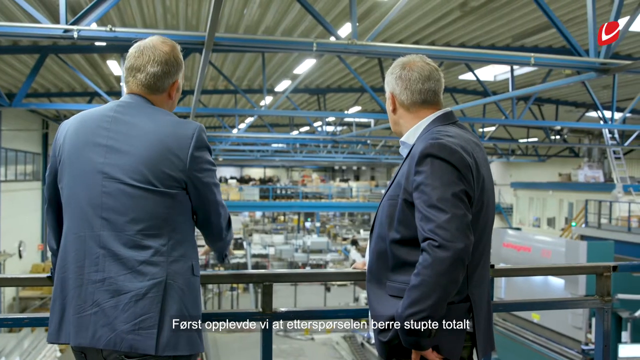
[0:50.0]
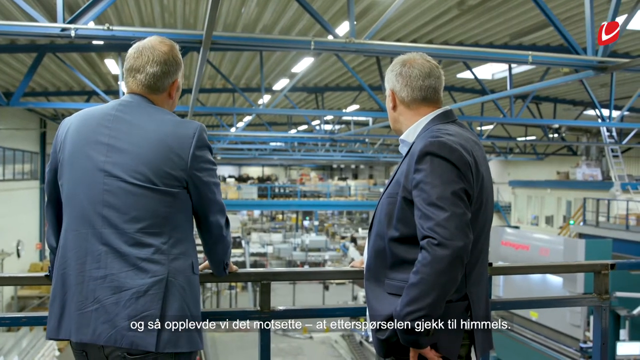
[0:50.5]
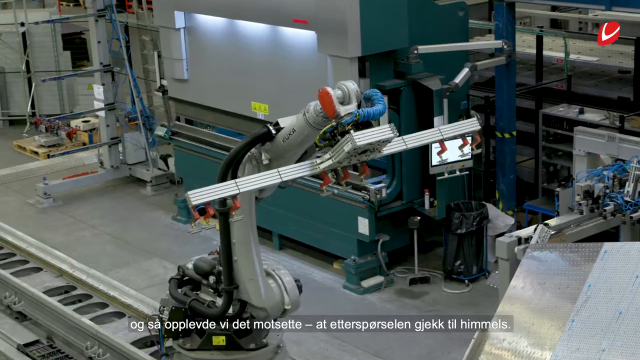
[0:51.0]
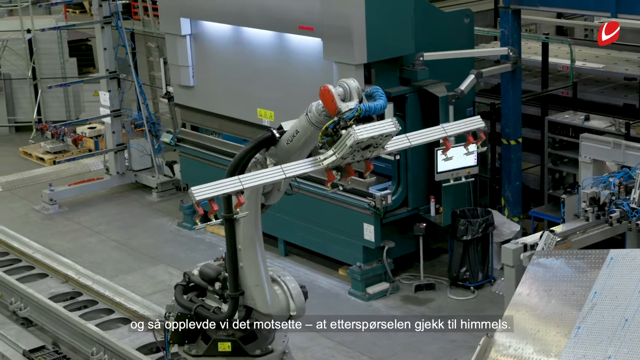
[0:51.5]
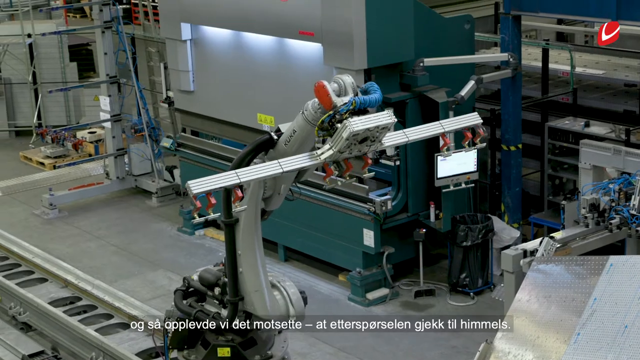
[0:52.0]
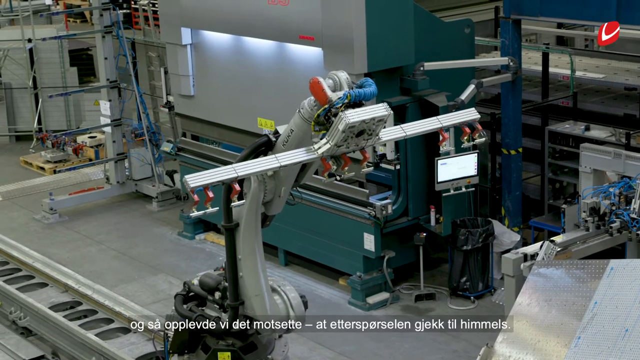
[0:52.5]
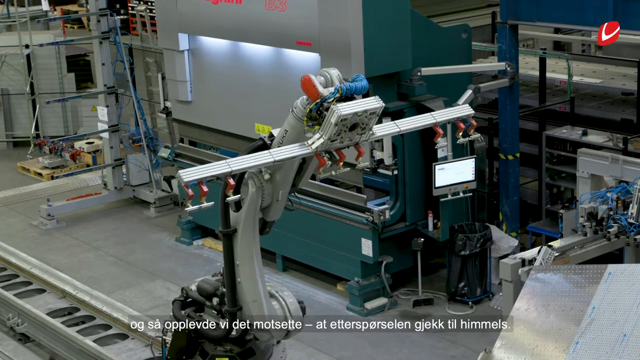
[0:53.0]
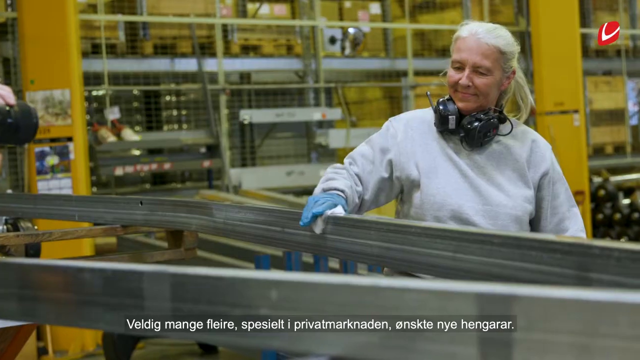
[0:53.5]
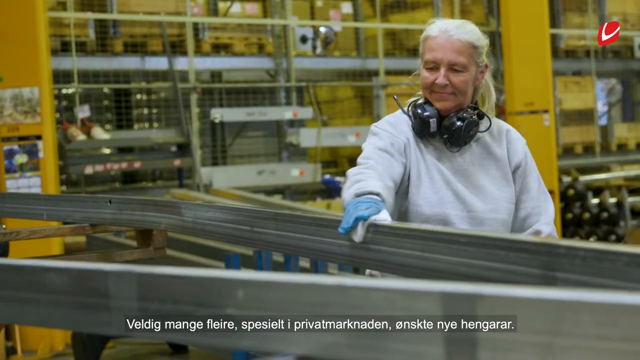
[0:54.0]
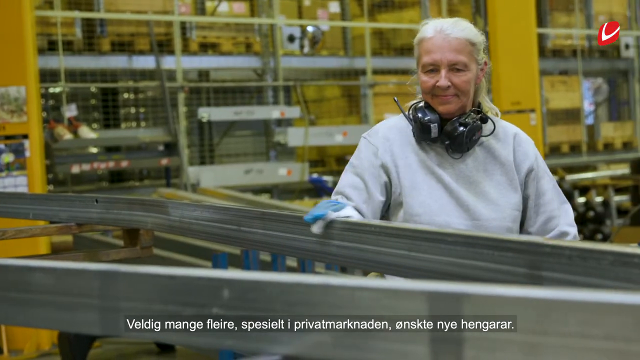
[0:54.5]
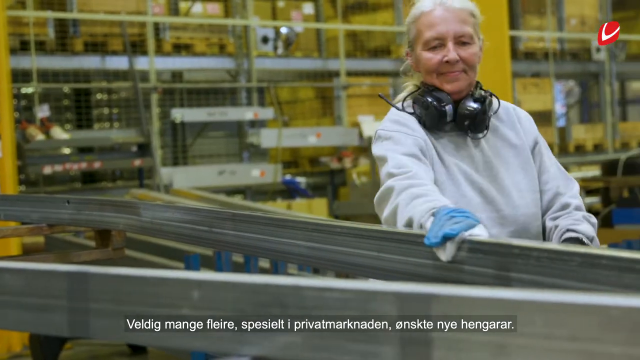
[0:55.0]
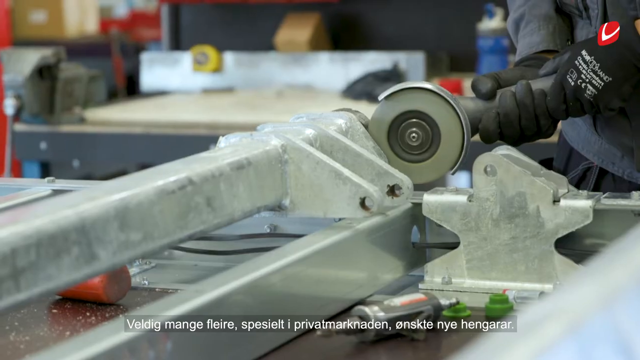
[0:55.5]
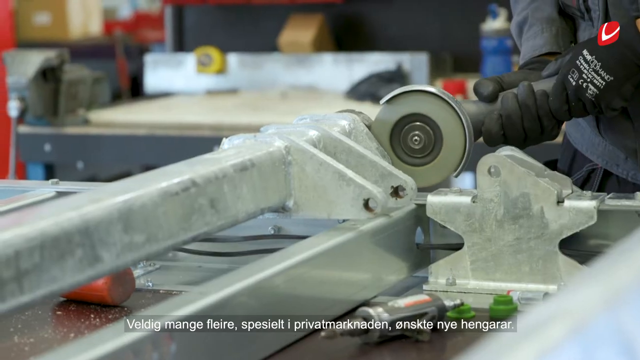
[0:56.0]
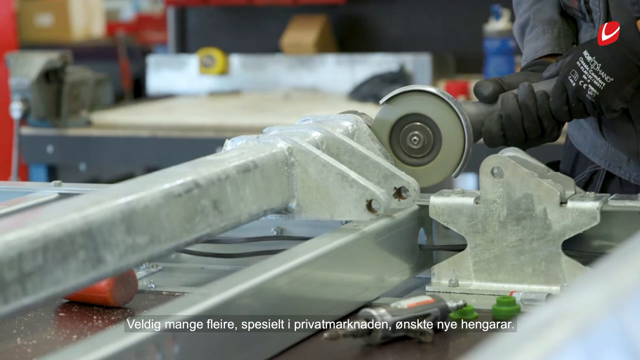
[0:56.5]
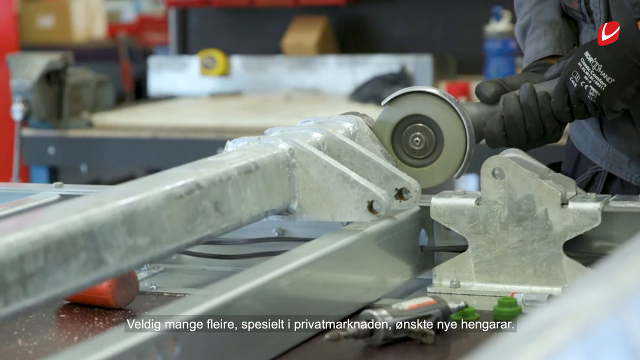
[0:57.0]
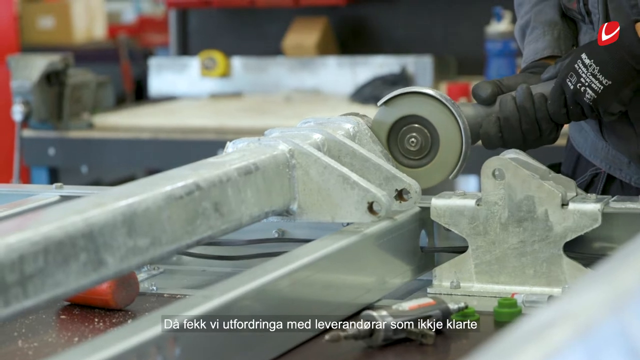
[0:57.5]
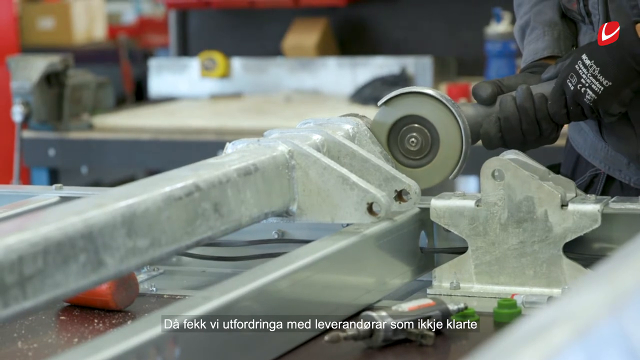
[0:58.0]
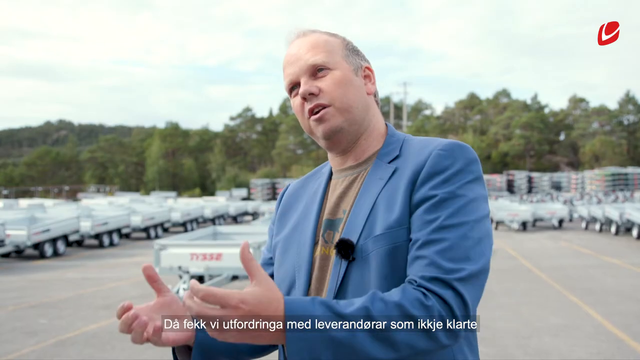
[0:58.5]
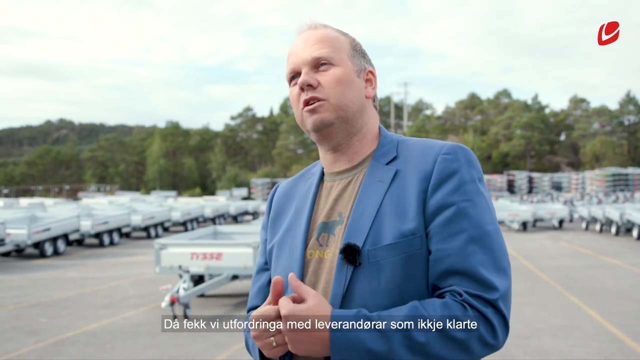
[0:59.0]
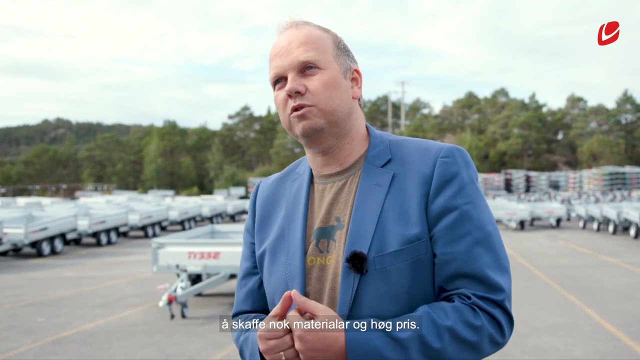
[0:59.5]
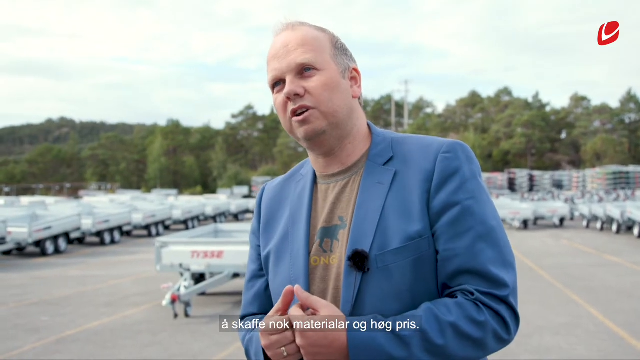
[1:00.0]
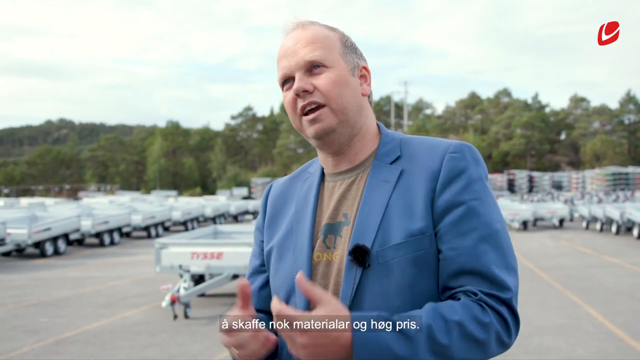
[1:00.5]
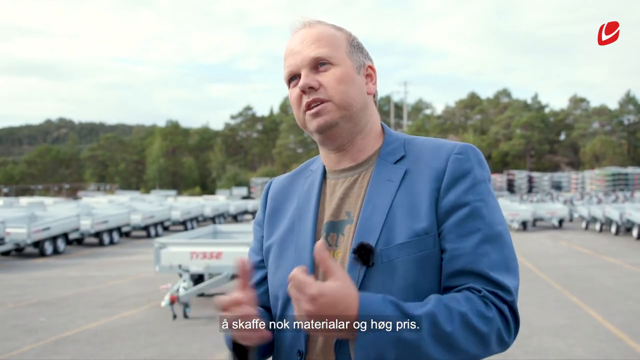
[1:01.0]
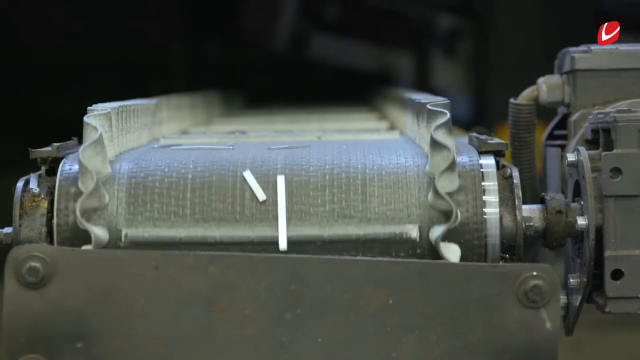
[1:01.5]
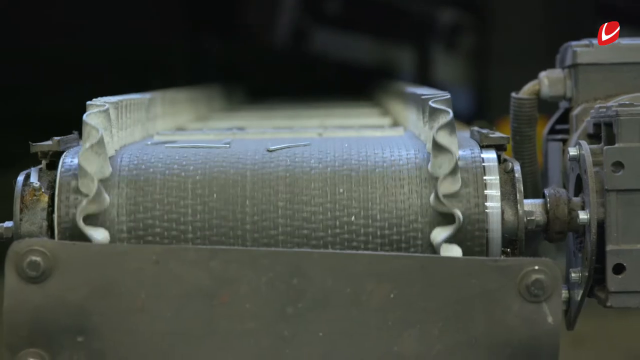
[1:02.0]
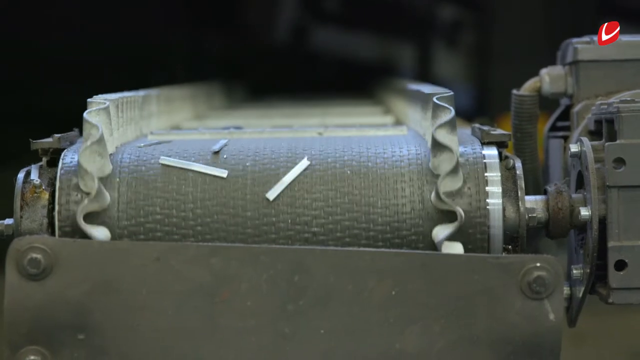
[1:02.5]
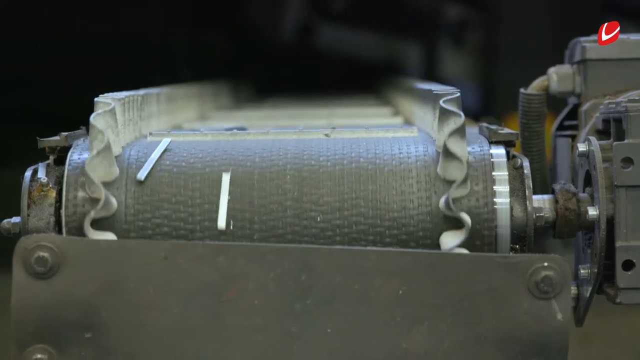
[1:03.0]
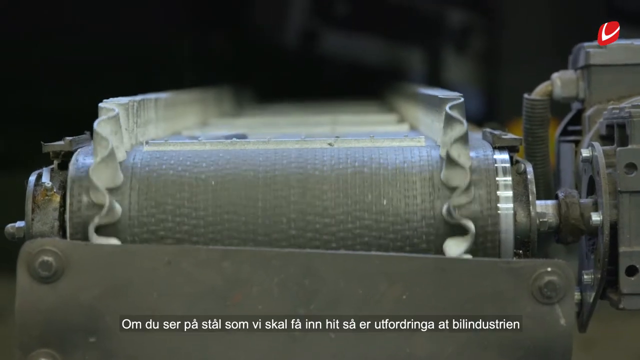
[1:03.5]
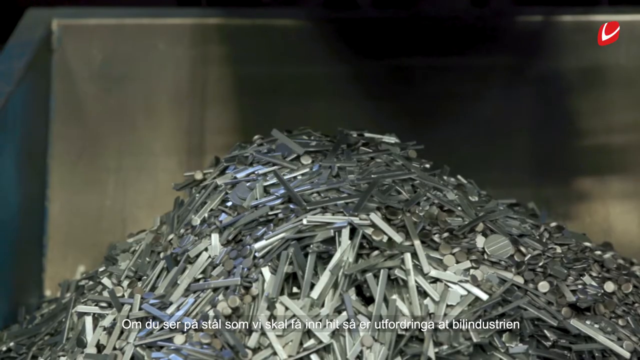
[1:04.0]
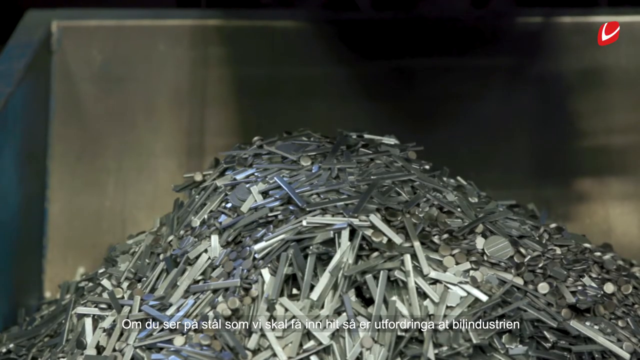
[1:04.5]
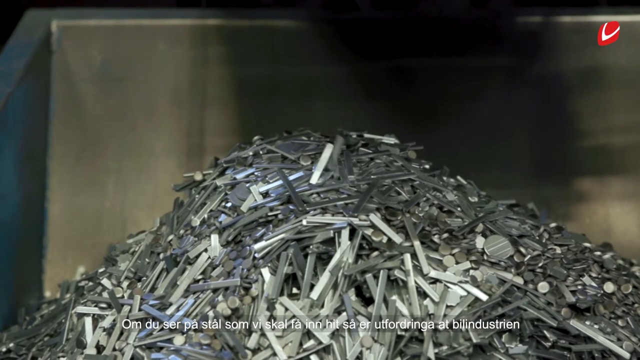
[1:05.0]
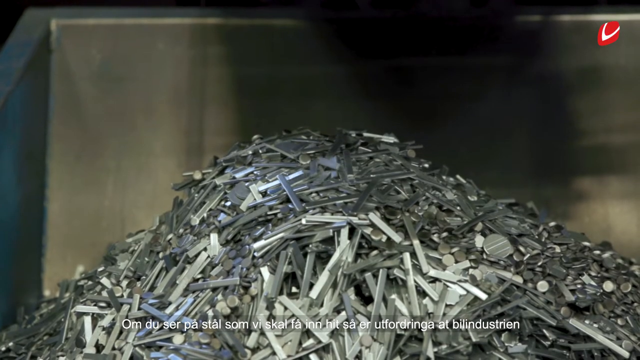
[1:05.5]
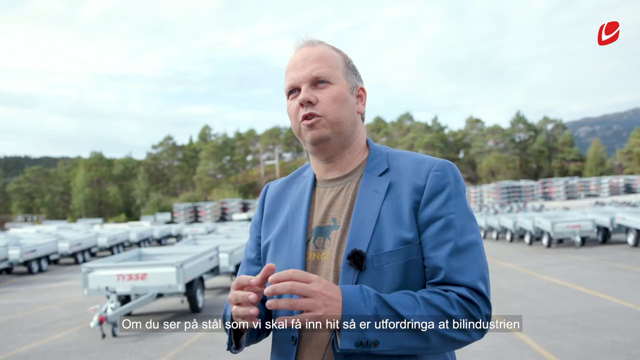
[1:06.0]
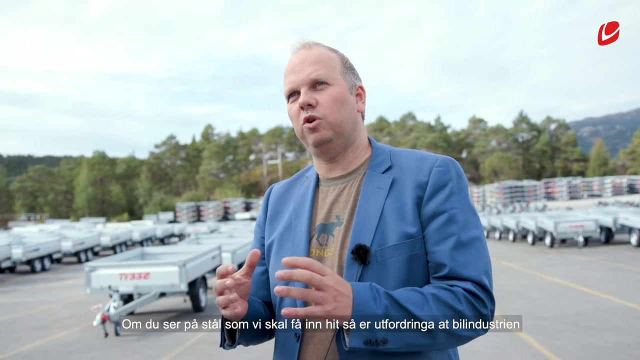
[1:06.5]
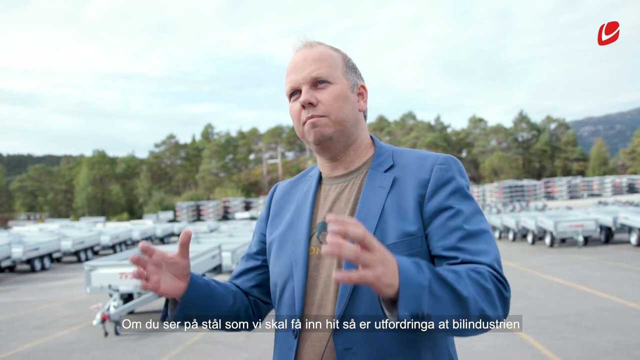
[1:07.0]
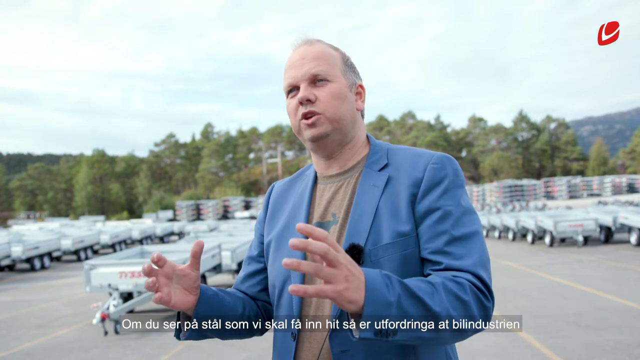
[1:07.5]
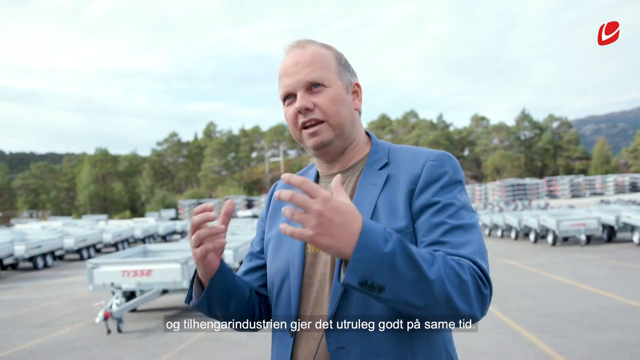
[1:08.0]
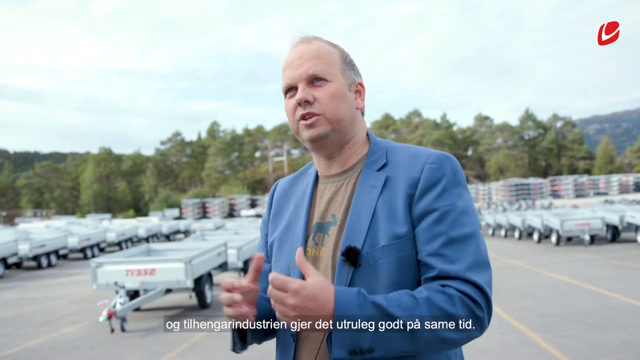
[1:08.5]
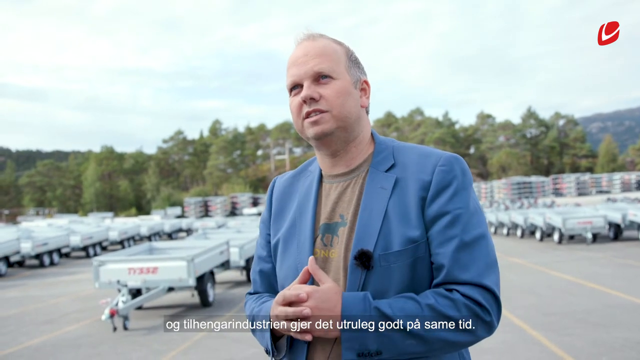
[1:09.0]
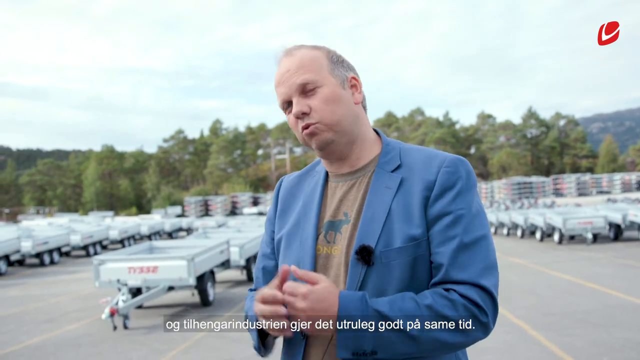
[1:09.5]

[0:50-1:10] The two men who were previously shown talking individually to the camera are now both inside the warehouse, on a higher level from which they could look down on the employees and the equipment. Words keep appearing on screen while the work environment is shown: people working, and small metal pieces being intentionally dropped onto something like a pallet. The first man, whose hair is either white or gray, is then shown.